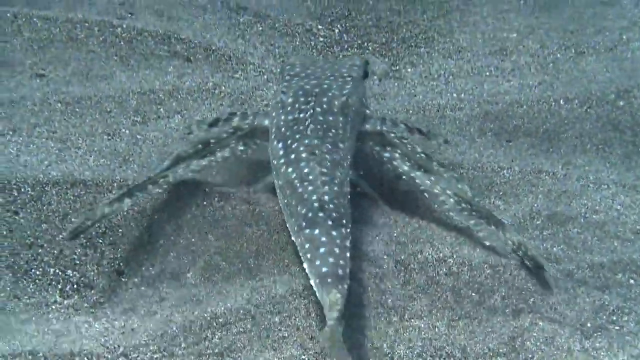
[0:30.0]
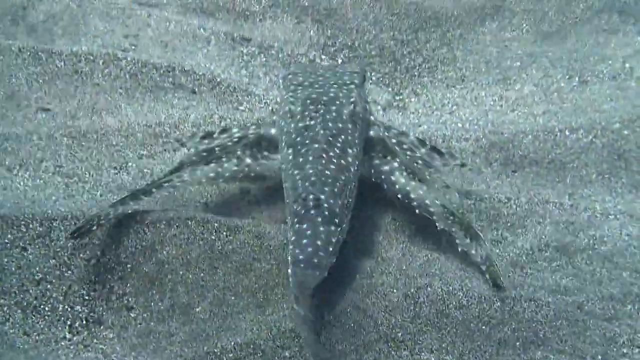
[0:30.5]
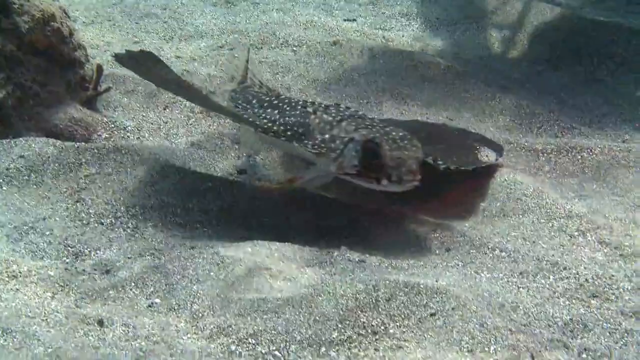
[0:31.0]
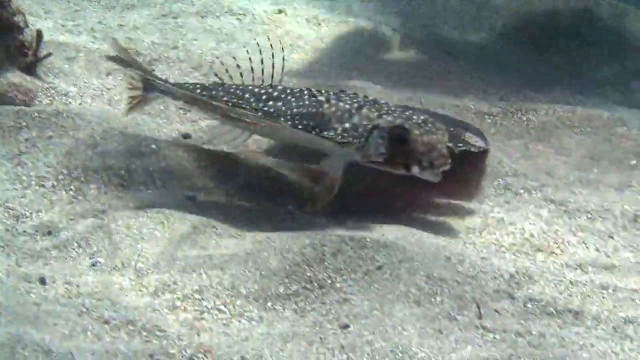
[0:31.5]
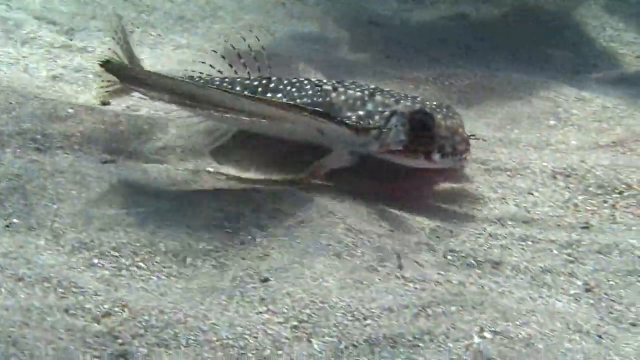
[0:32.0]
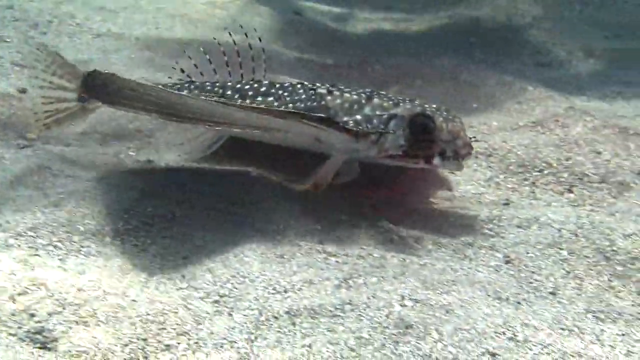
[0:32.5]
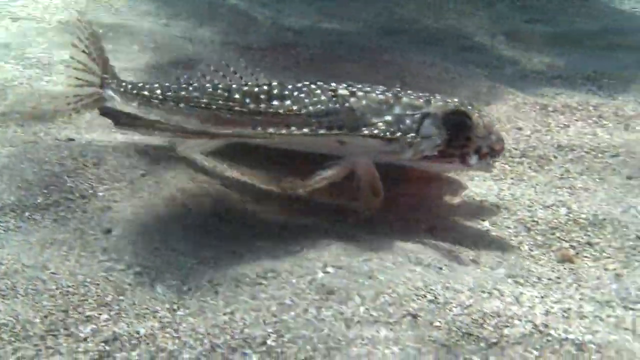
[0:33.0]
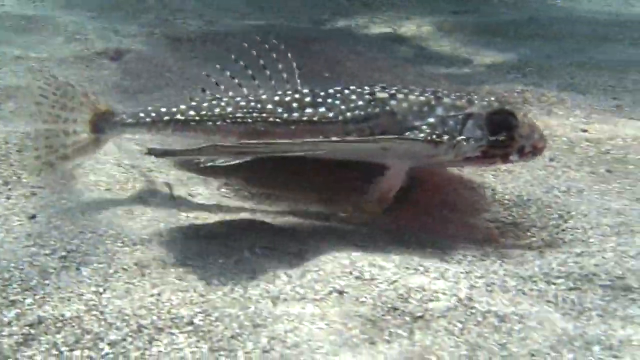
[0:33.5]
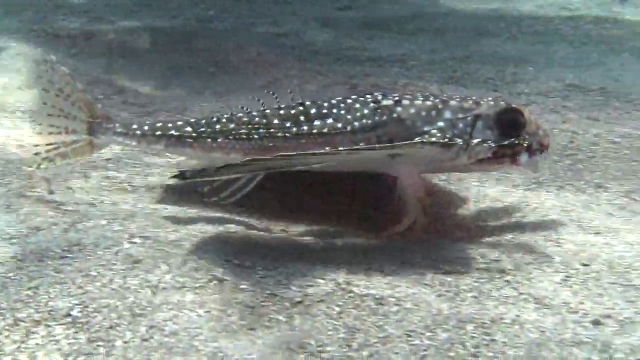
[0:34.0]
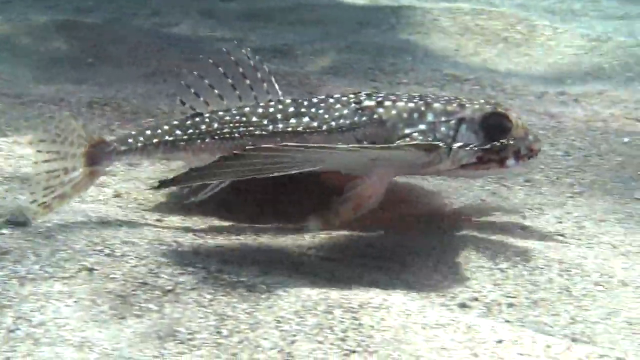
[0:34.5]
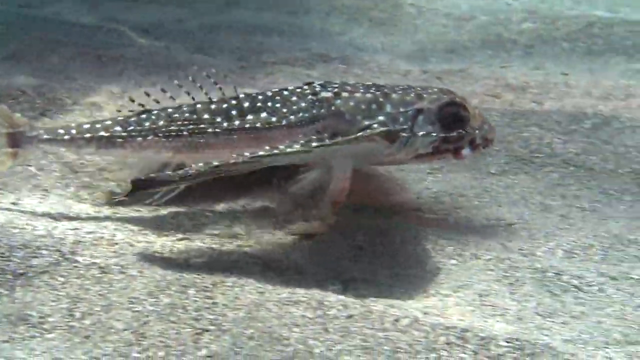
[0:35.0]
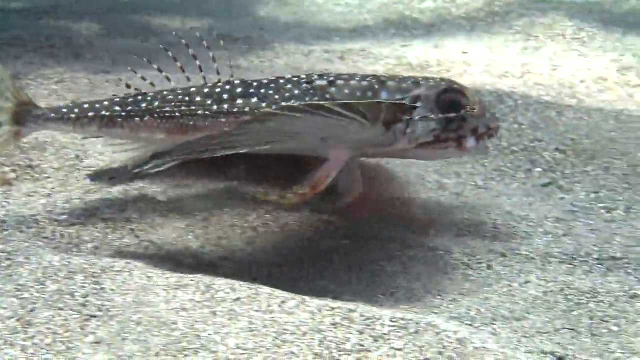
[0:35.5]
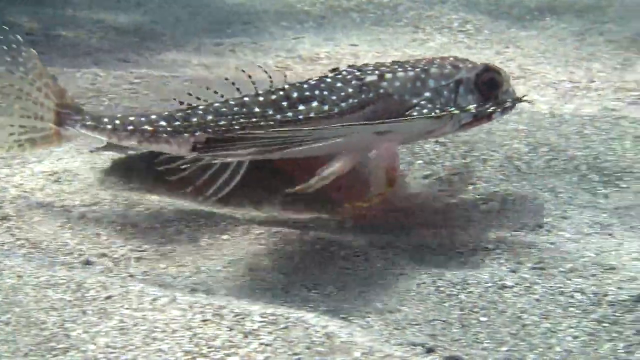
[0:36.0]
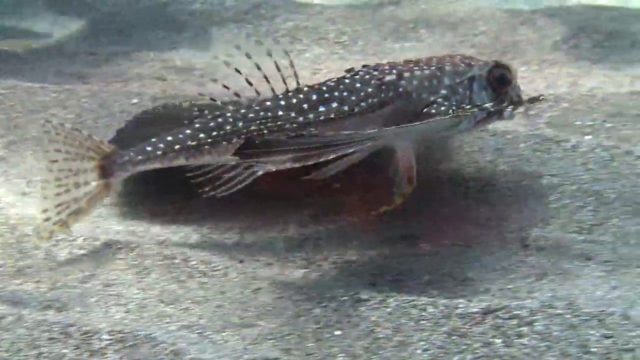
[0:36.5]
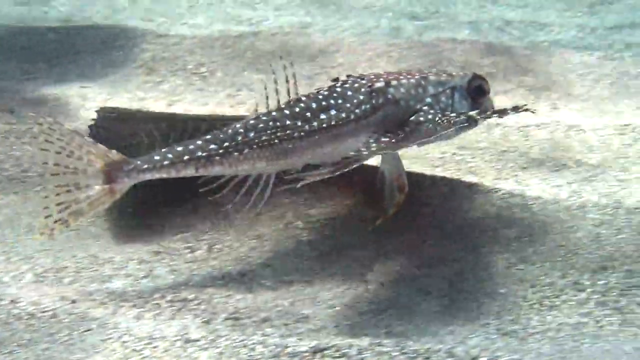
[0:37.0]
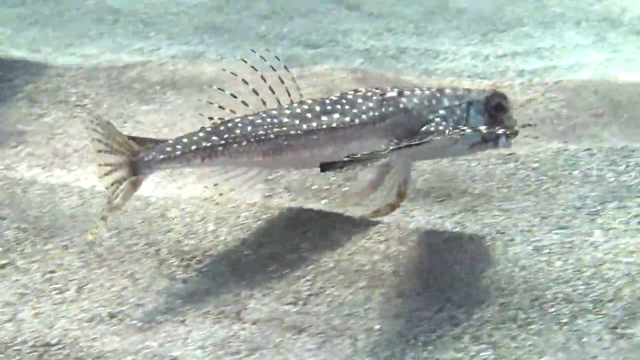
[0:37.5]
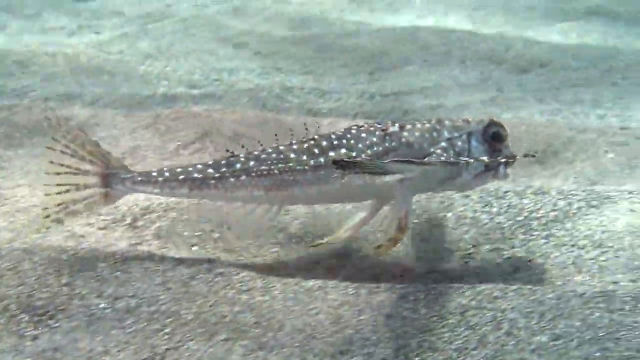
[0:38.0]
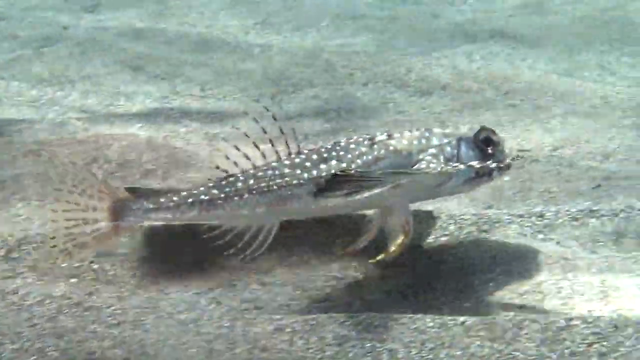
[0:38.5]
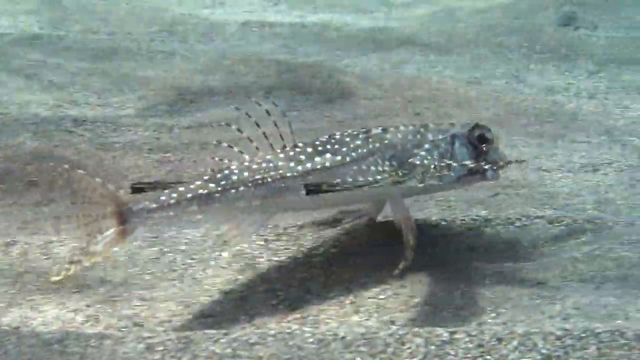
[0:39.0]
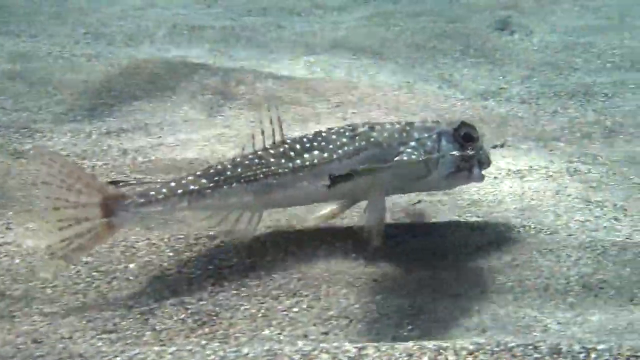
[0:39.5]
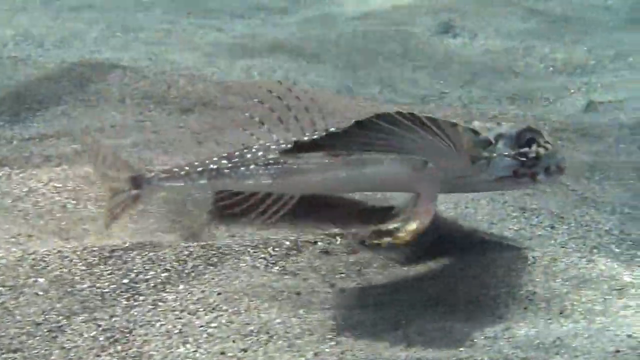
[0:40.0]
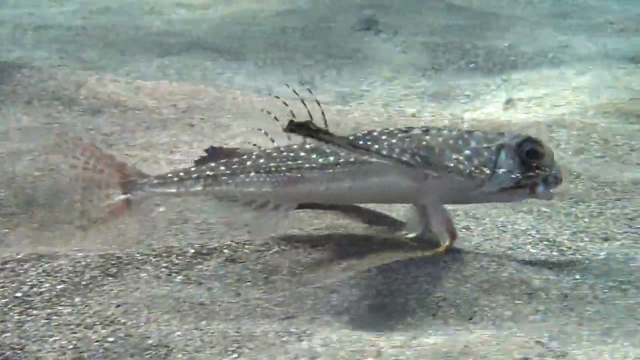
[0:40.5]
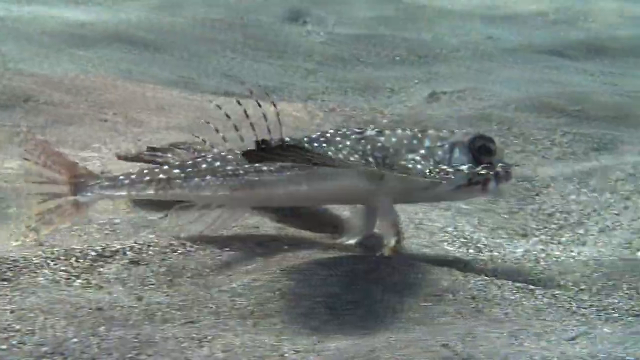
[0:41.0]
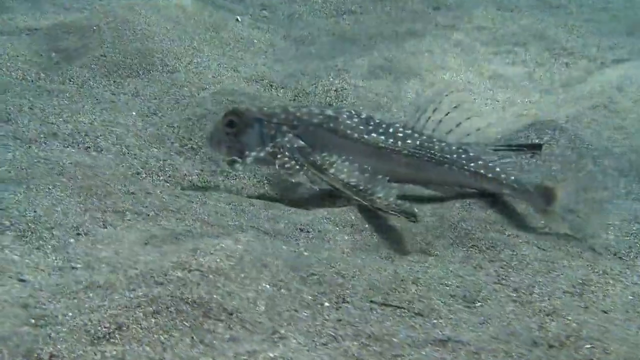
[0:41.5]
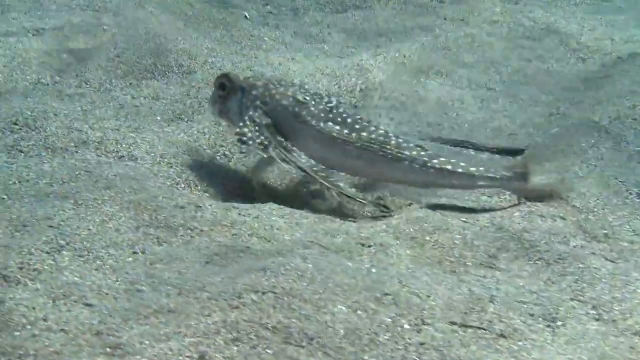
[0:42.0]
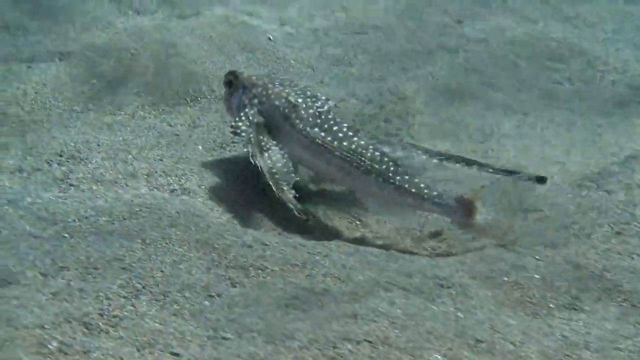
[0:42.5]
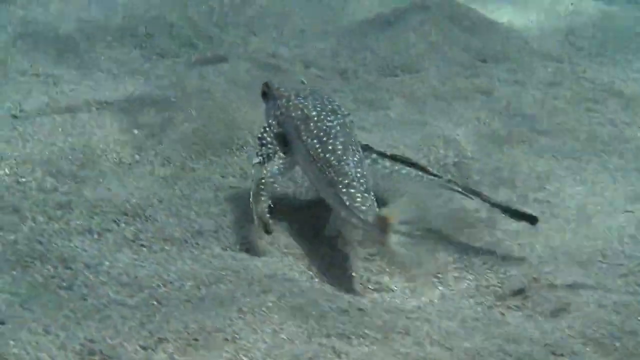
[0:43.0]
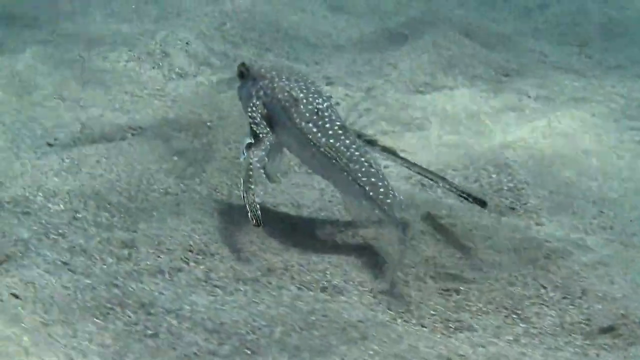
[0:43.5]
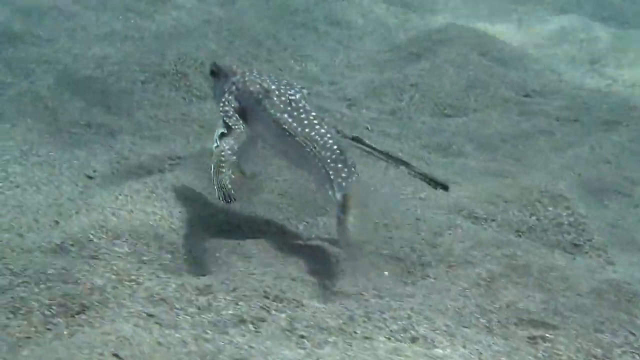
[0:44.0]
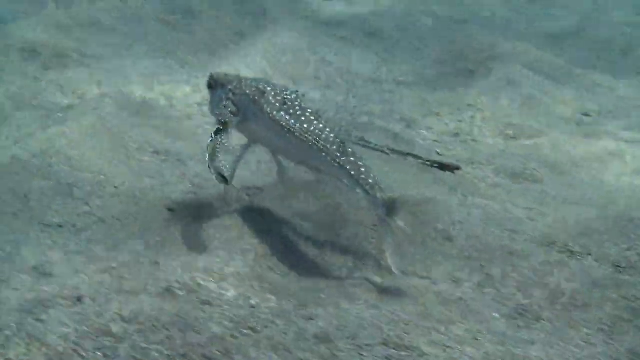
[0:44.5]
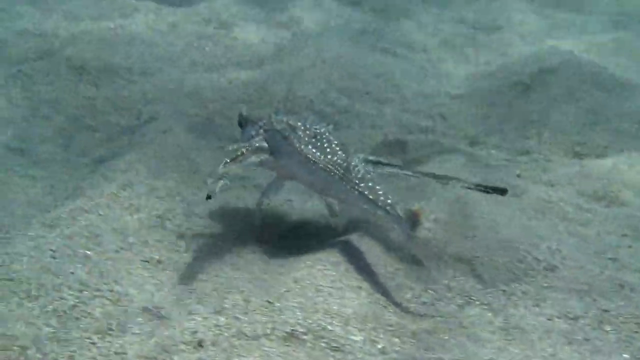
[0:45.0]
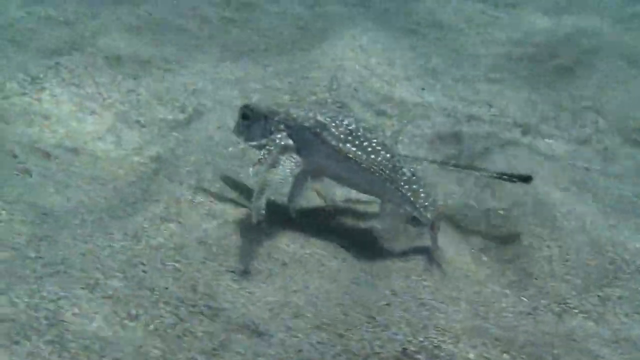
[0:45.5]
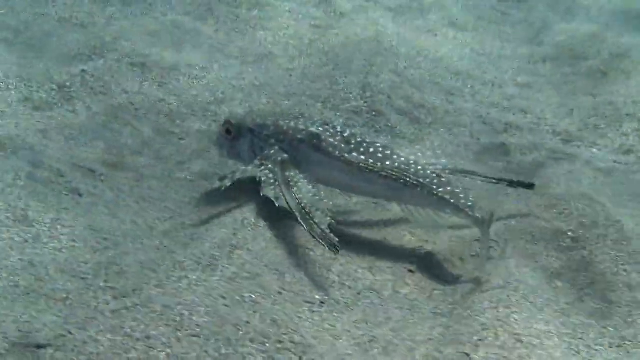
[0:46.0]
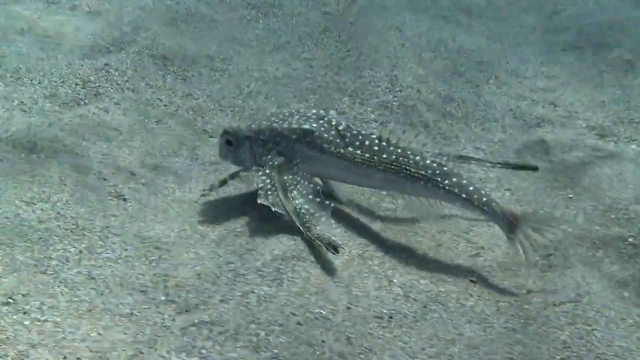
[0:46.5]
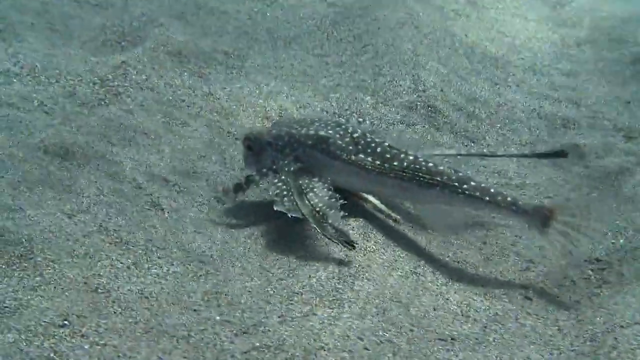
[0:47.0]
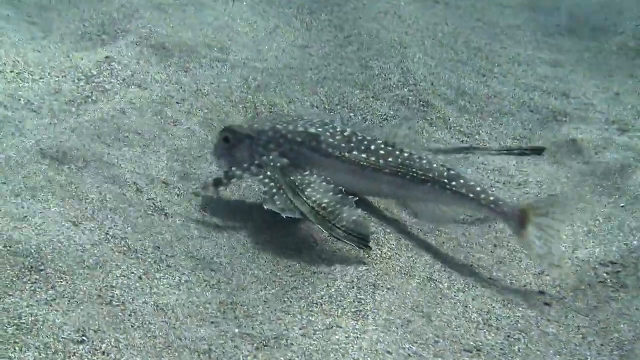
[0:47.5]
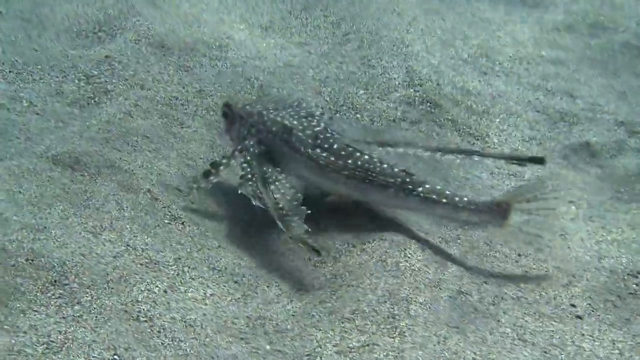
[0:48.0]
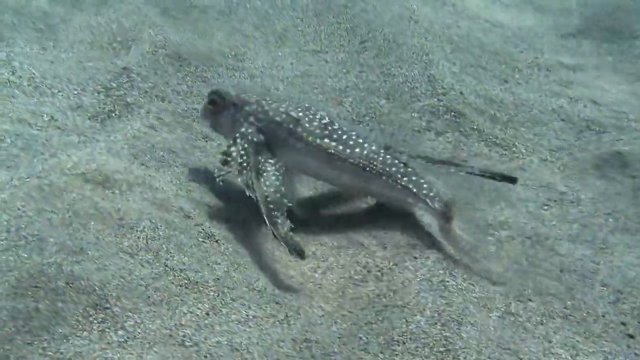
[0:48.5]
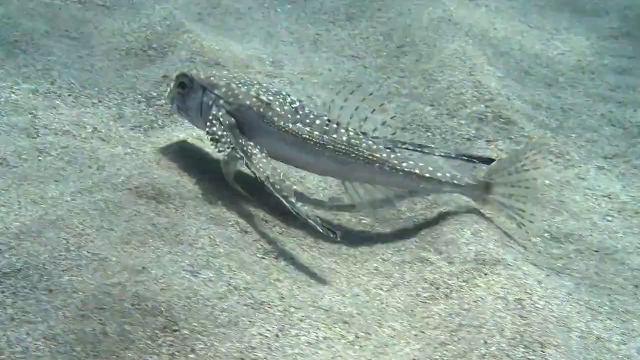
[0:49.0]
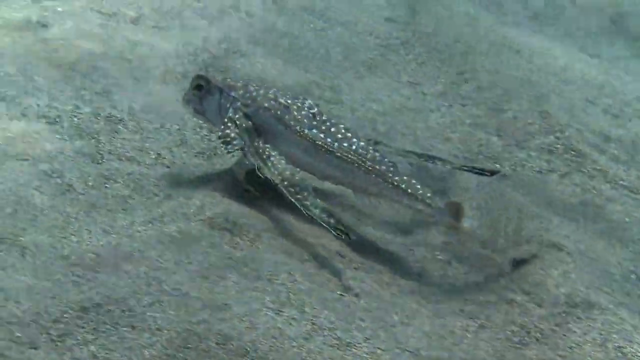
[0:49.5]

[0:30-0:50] A fish moves along the sandy bottom of the ocean; it is apparently some type of specialized hunter. It has very long fins on the right and left sides of its body, and just above and behind them are shorter fins. The shorter fins in the middle of the body act kind of like legs as it walks along the bottom, while the two fins closer to the eyes act as arms that kind of brush sand out of the way and are used in a walking motion. It is a saltwater fish whose body looks like a puffer fish, with sandy-looking camouflage that blends in with the sandy bottom. It has large eyes.